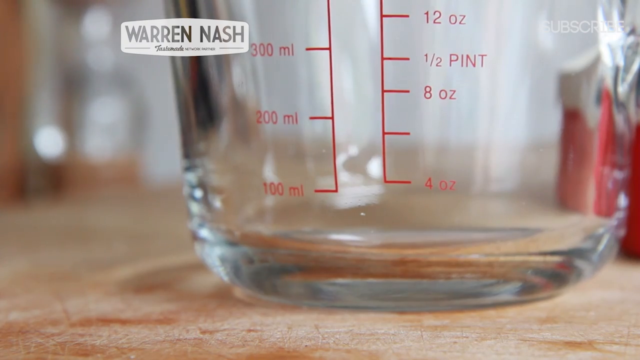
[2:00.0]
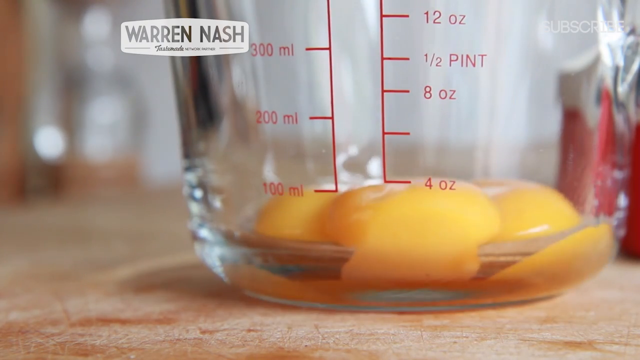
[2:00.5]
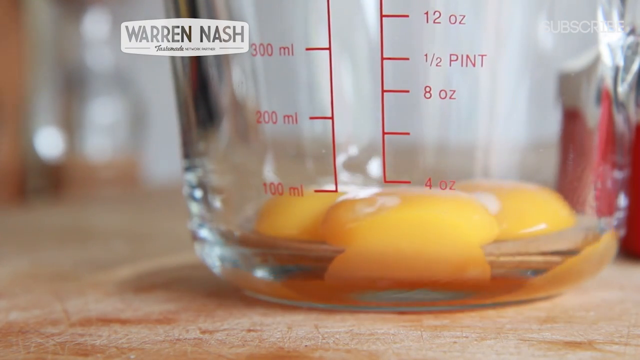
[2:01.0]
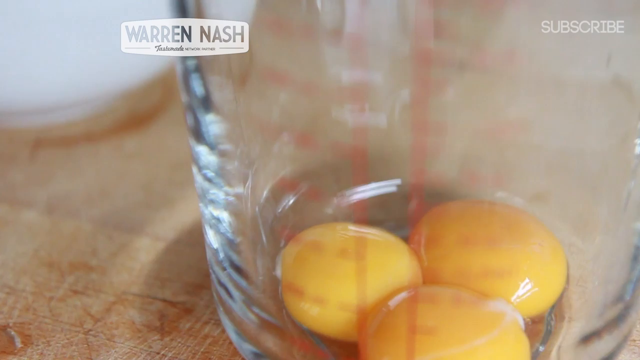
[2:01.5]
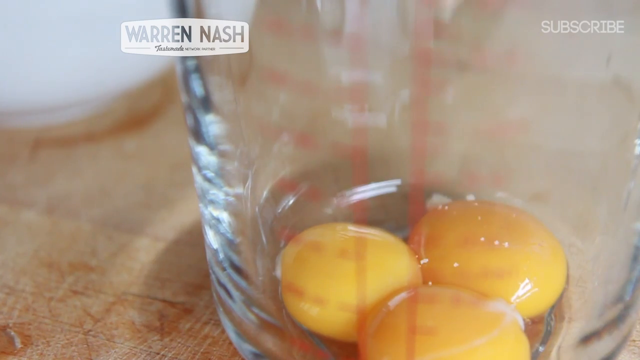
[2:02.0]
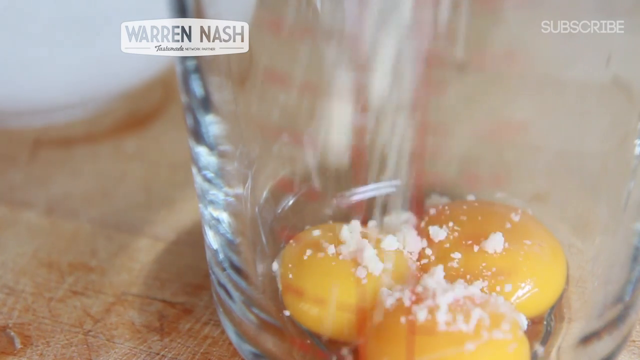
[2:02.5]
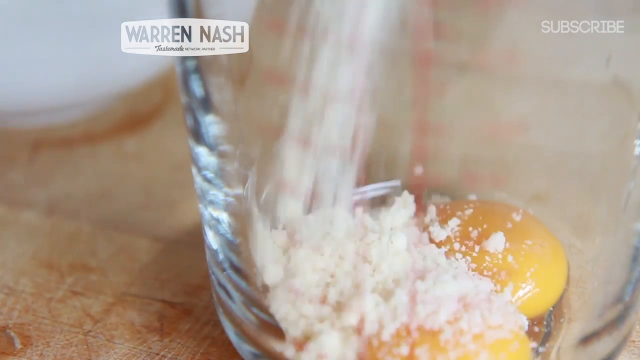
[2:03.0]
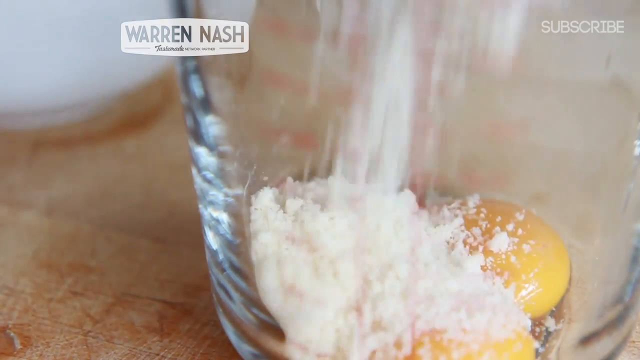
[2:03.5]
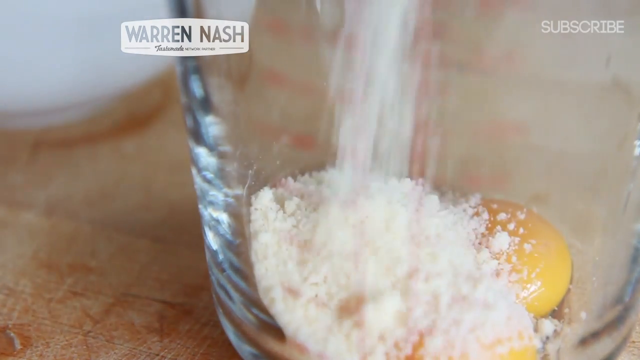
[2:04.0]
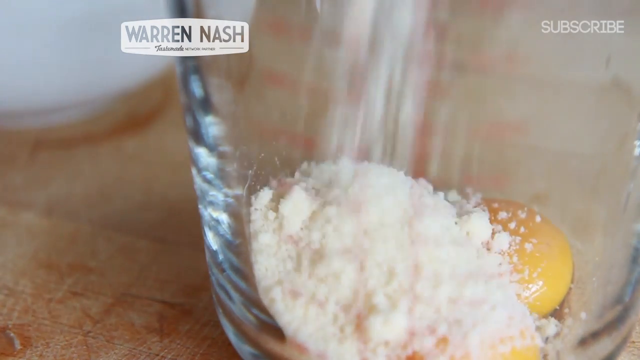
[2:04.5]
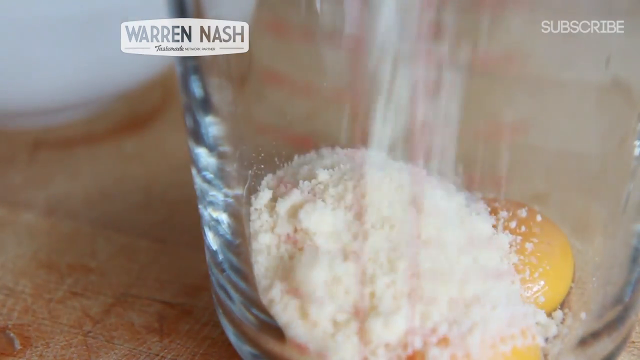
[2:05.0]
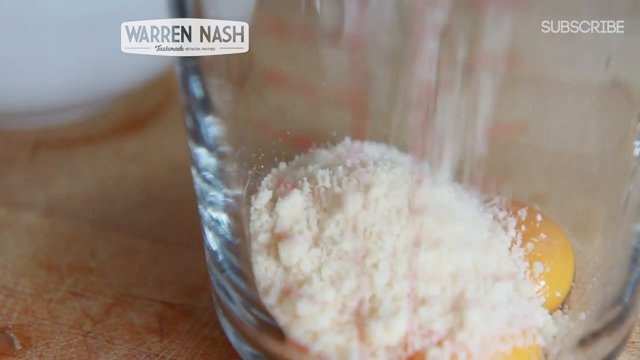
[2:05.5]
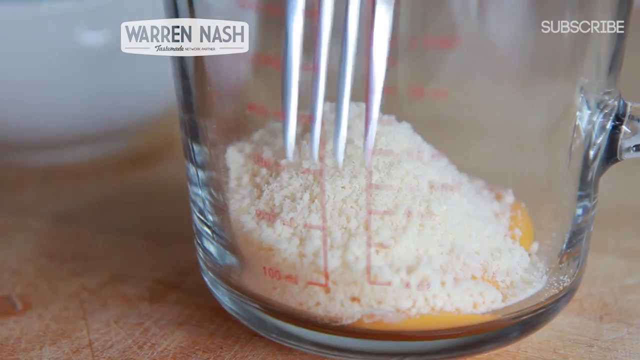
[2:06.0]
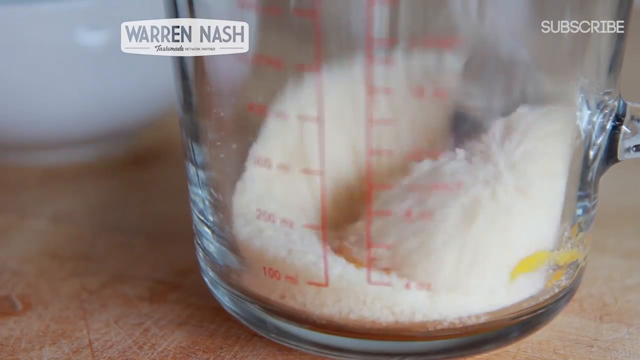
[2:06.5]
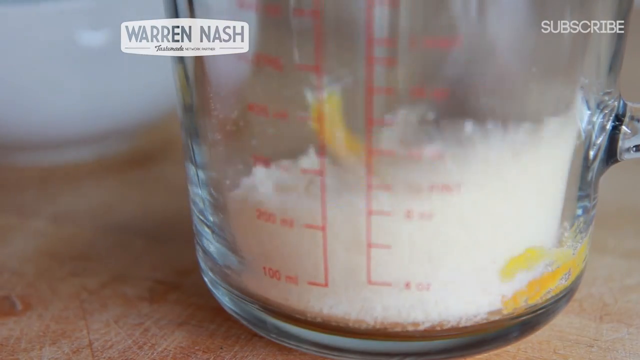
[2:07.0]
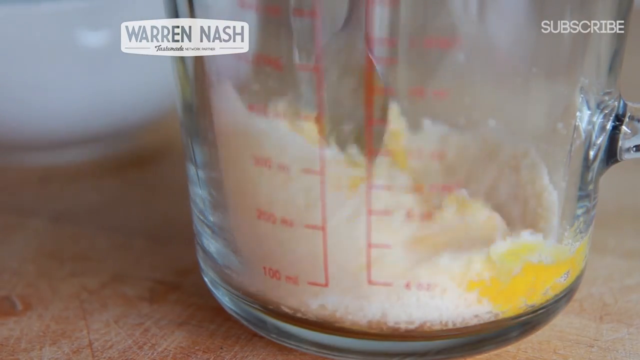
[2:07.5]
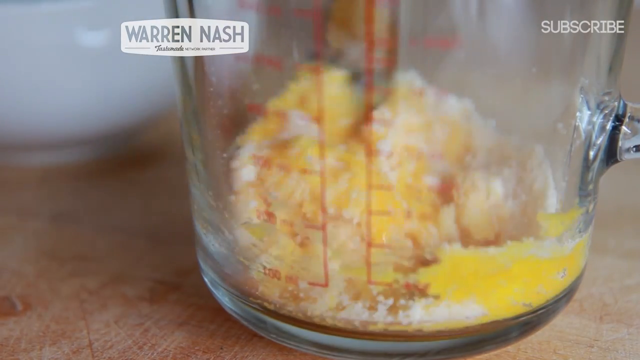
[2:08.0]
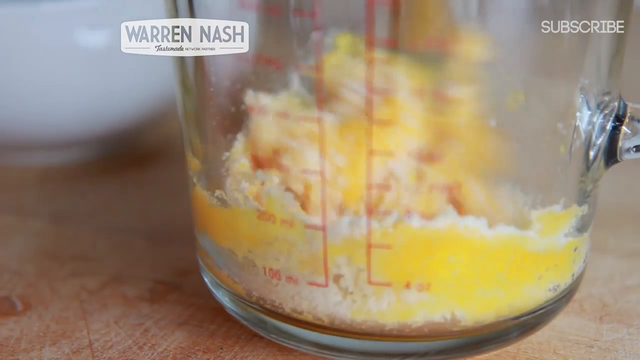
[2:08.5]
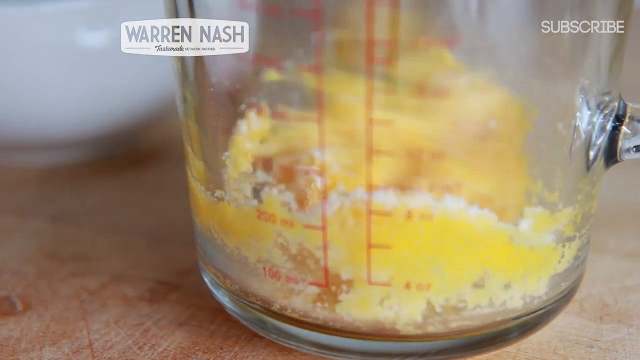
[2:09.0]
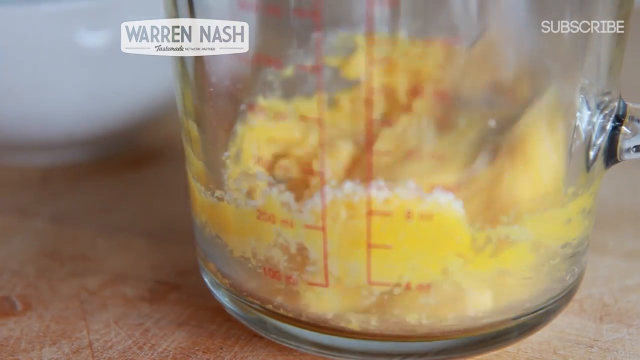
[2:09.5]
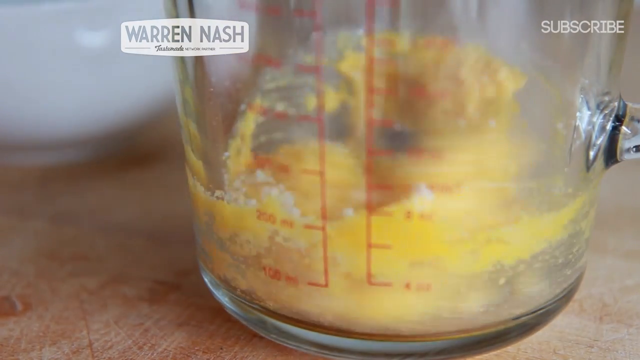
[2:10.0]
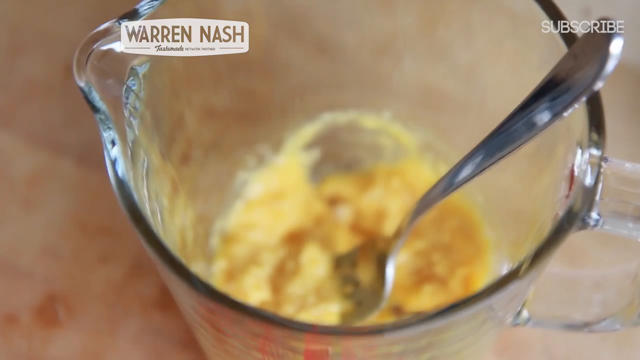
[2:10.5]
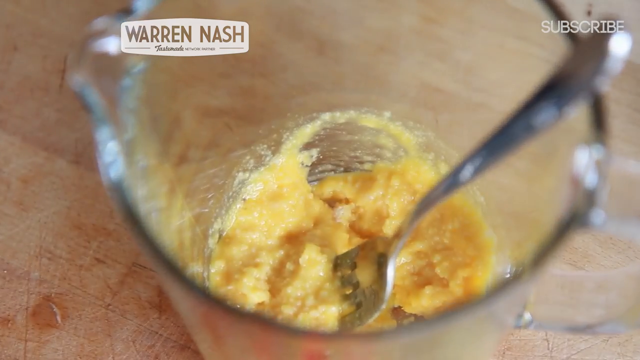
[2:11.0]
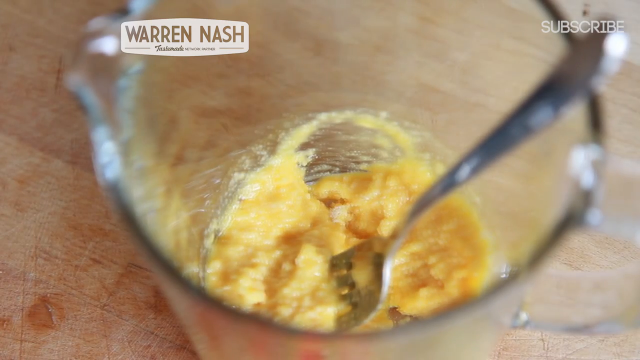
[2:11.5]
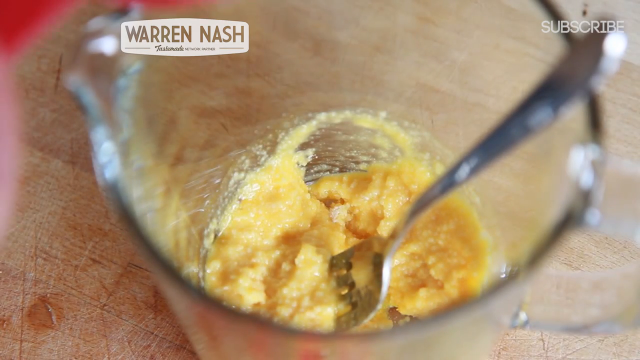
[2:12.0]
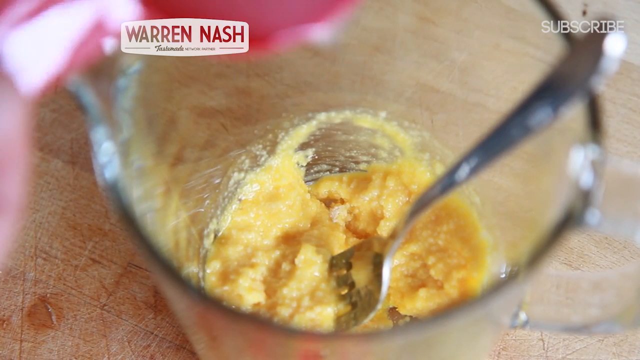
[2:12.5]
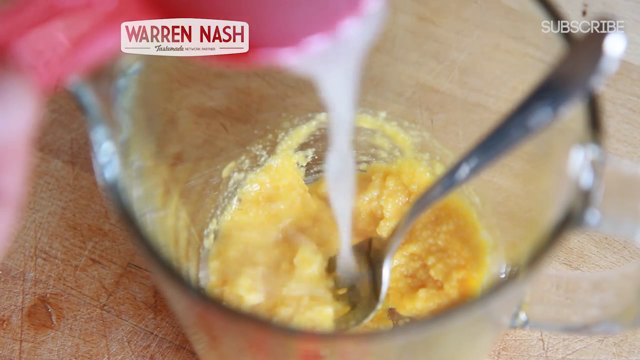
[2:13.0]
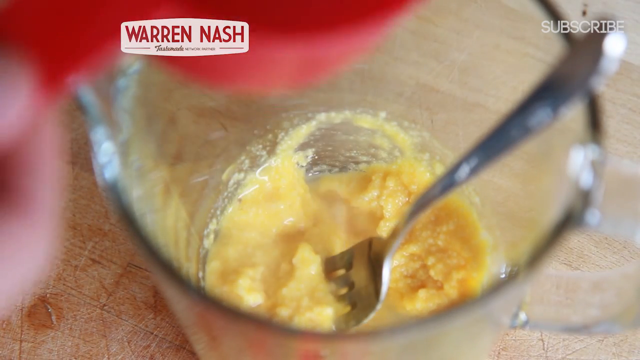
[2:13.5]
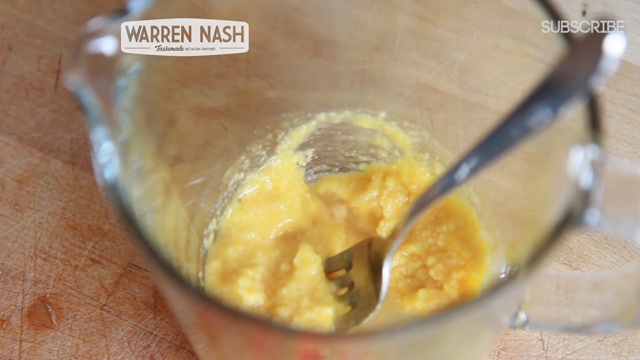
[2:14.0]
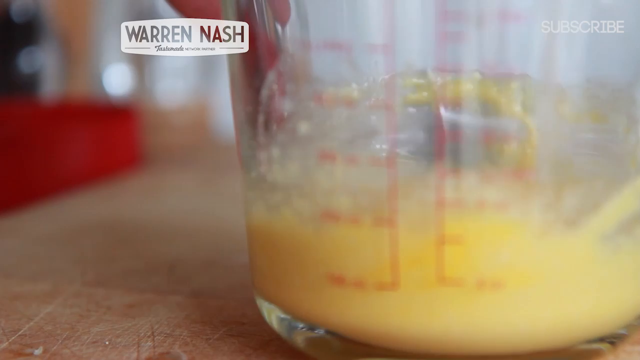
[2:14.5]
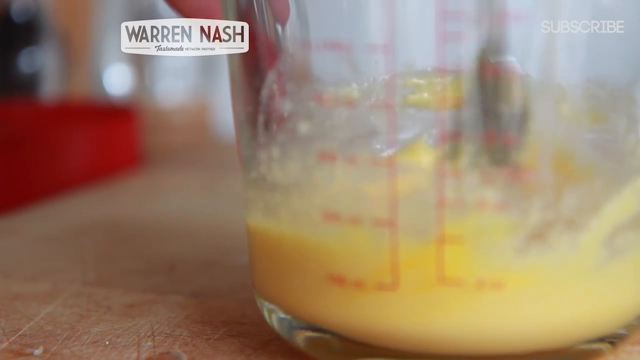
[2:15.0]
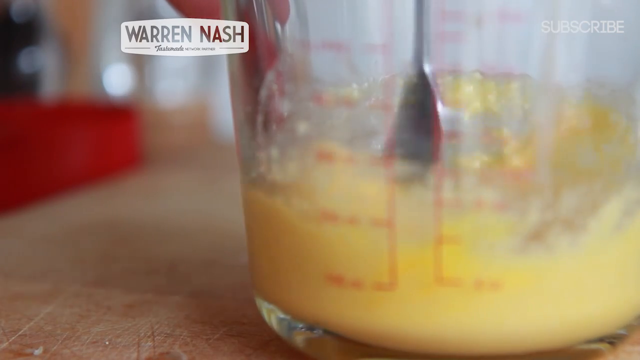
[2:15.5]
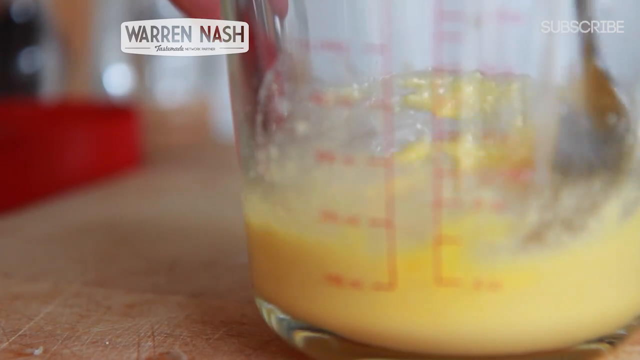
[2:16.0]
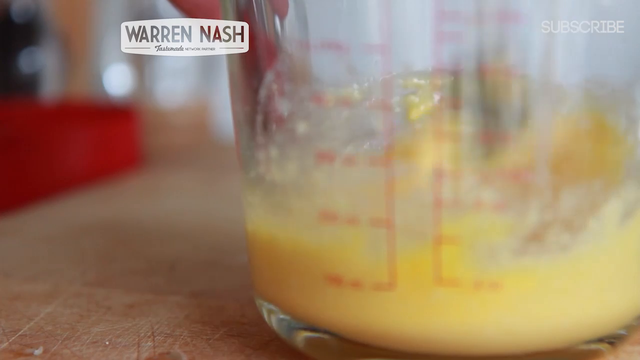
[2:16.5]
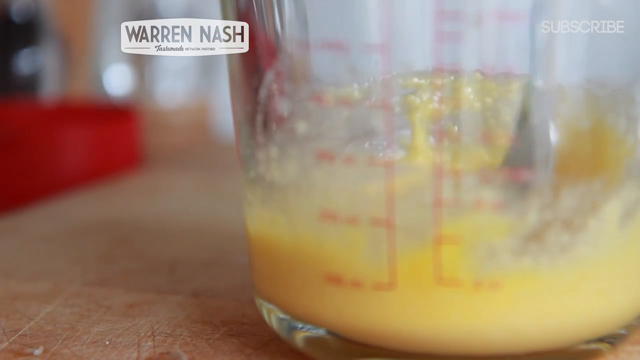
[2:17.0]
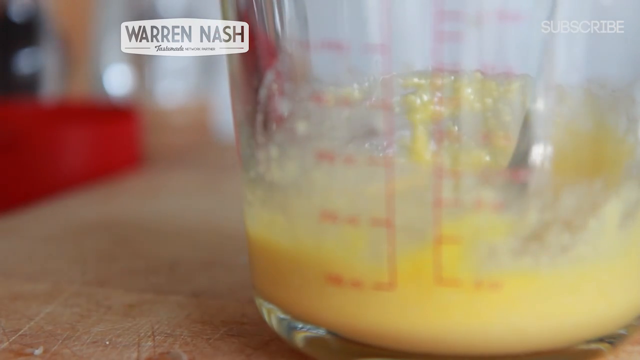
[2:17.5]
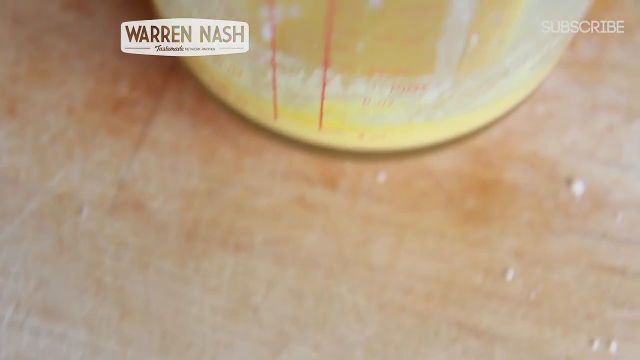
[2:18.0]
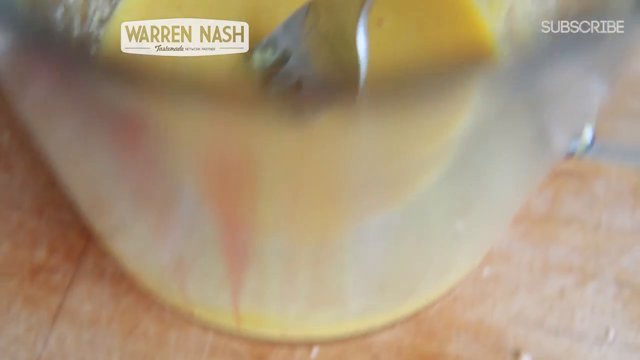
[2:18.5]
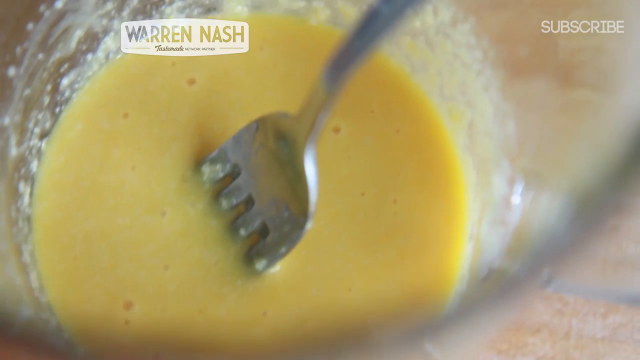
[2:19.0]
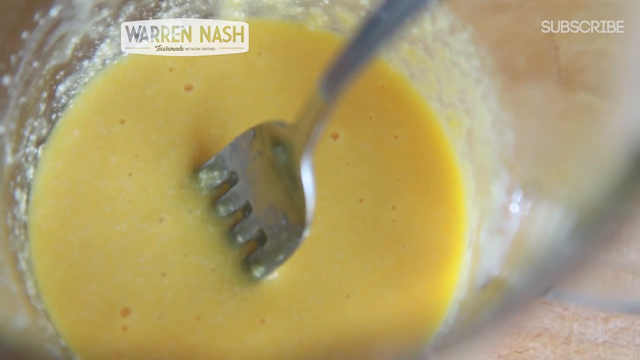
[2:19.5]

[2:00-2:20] In the jar, Warren takes three egg yolks and adds sugar, then stirs them together with a fork. He then pours what looks like lemon juice into the egg mixture and stirs it all. He seems about to pour this into the pot with the fried spaghetti, onion, bacon and butter. The sugar he uses is brown sugar, and the jar is on top of a wooden table that looks brown. He uses a pink measuring cup to measure the lemon juice that he pours into the egg yolks. He uses only the yolks, having separated them from the egg whites.